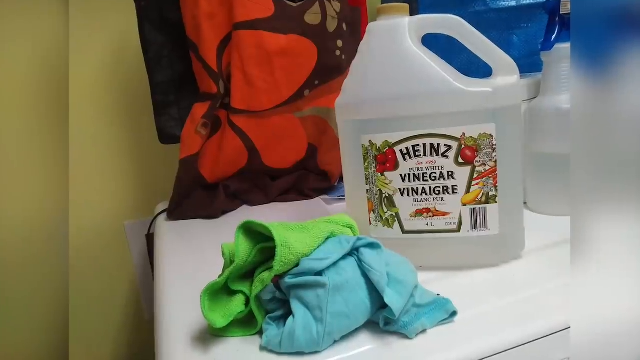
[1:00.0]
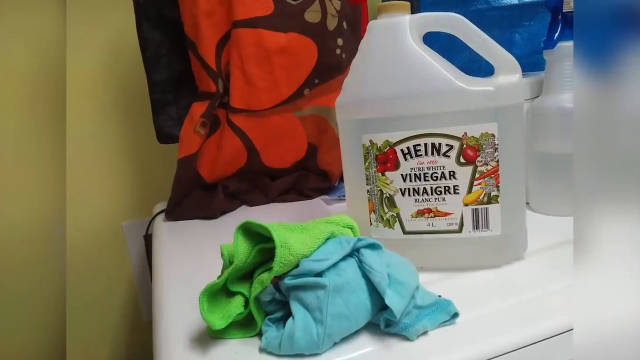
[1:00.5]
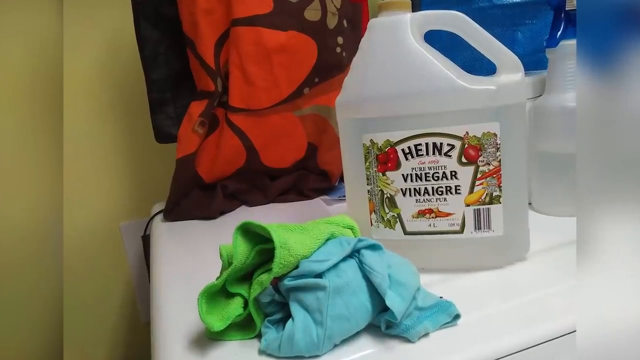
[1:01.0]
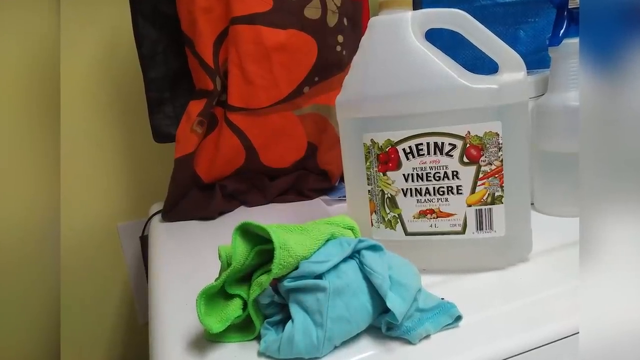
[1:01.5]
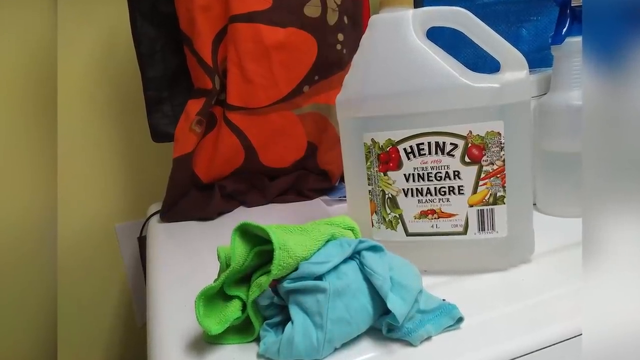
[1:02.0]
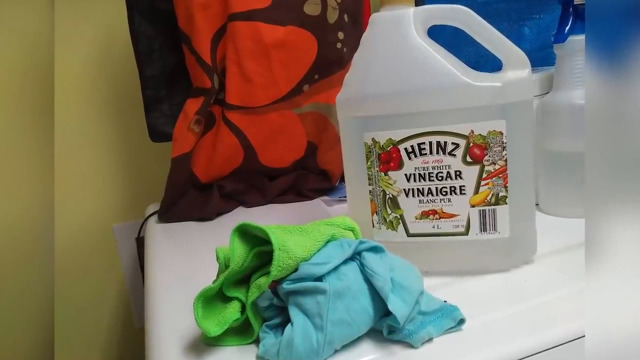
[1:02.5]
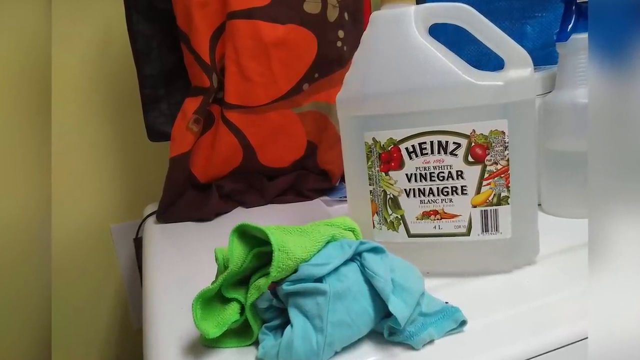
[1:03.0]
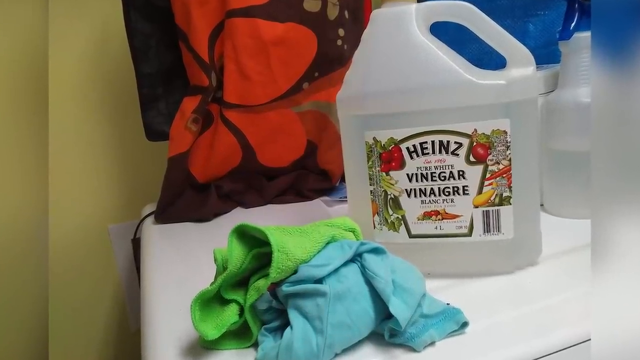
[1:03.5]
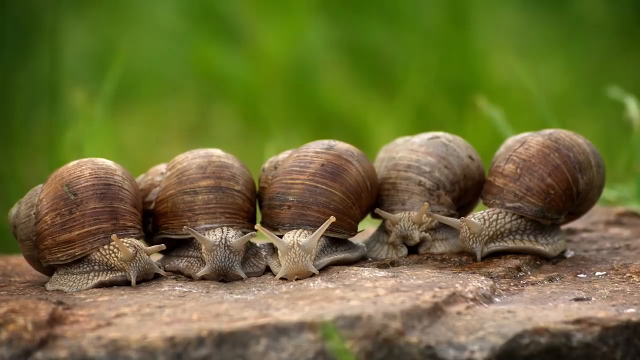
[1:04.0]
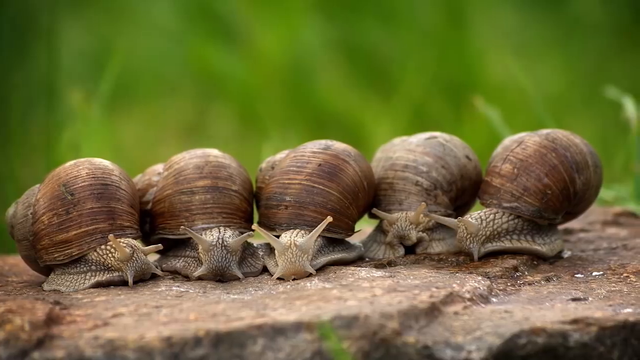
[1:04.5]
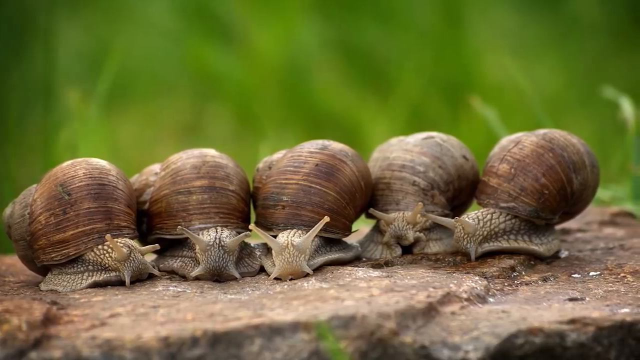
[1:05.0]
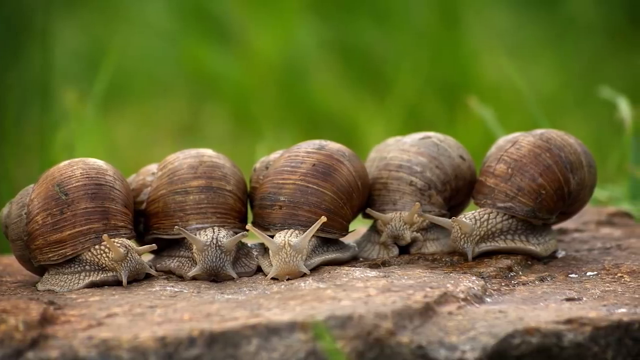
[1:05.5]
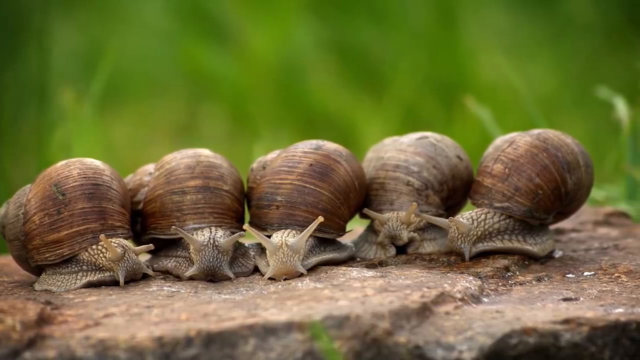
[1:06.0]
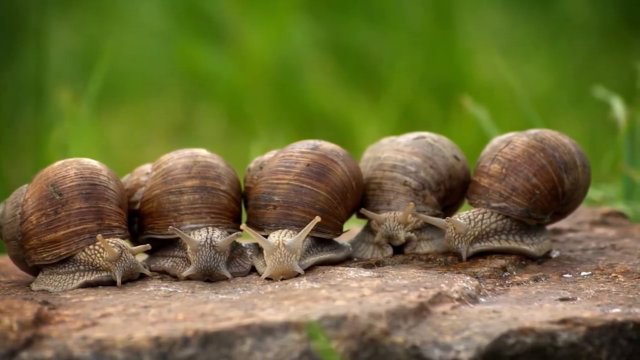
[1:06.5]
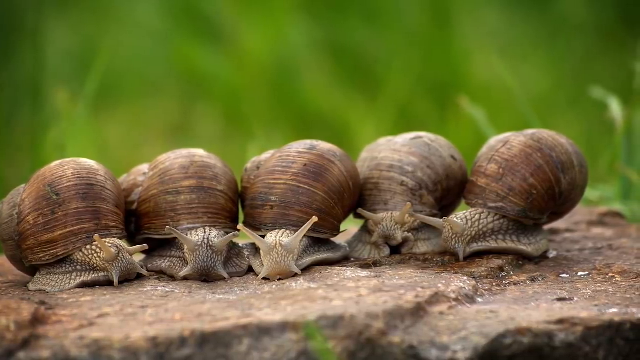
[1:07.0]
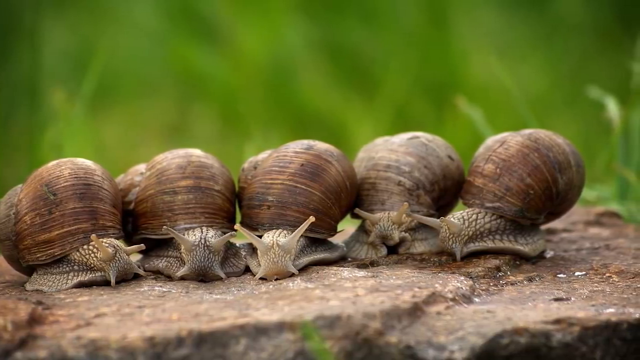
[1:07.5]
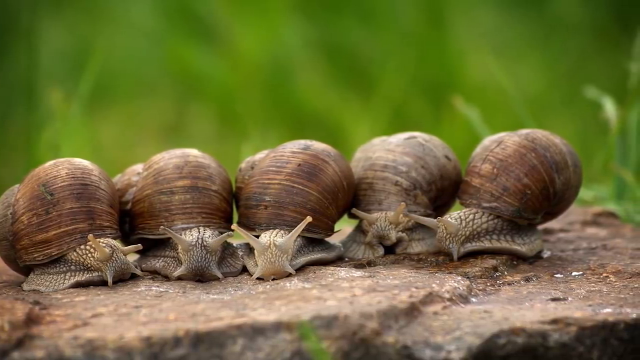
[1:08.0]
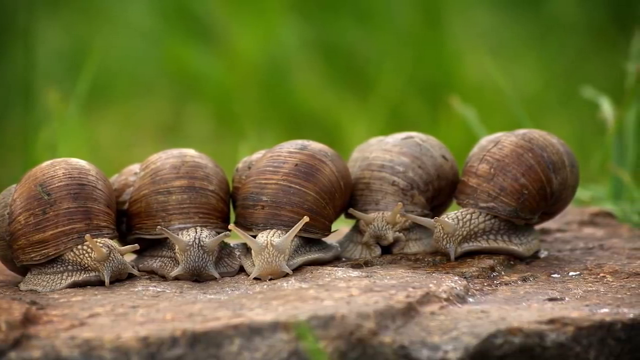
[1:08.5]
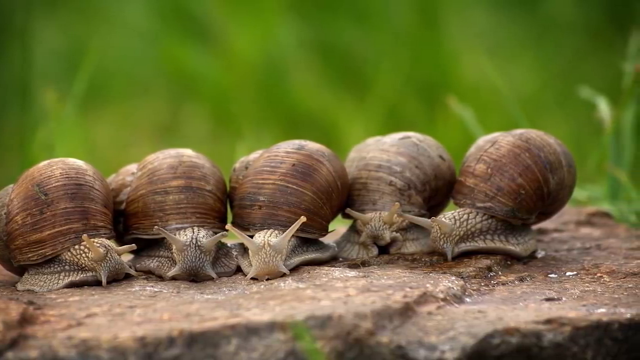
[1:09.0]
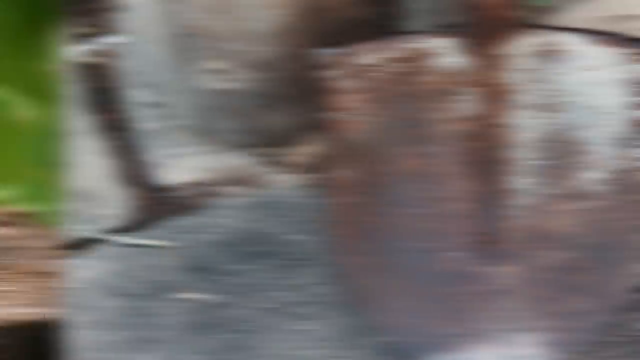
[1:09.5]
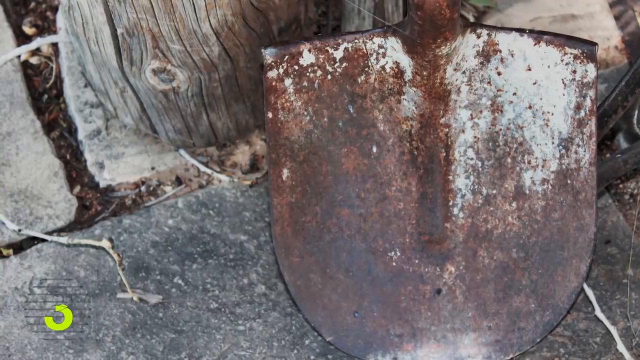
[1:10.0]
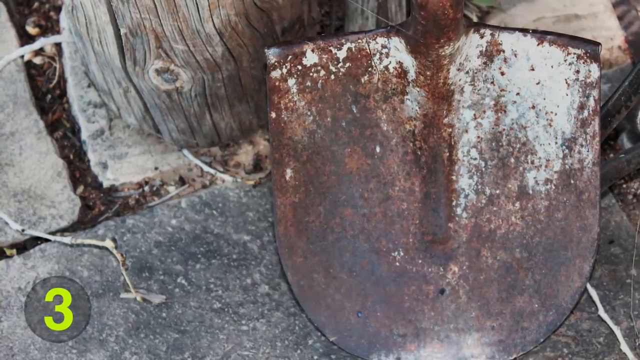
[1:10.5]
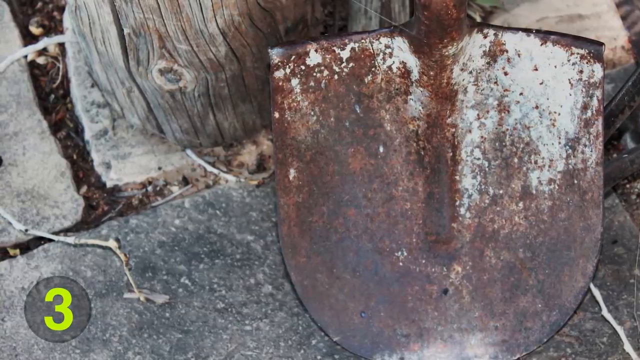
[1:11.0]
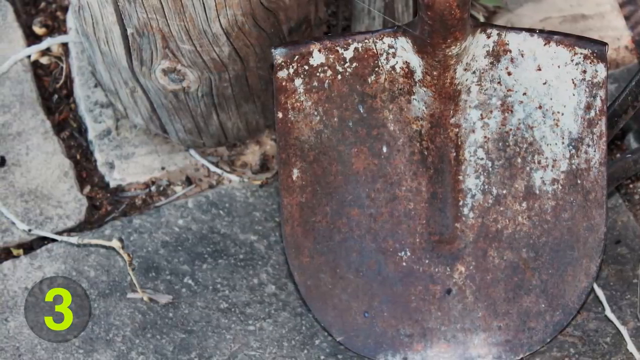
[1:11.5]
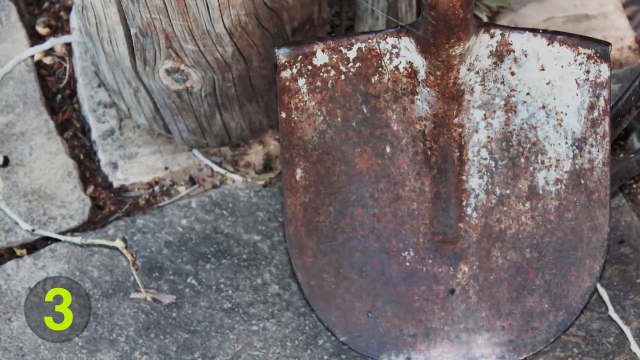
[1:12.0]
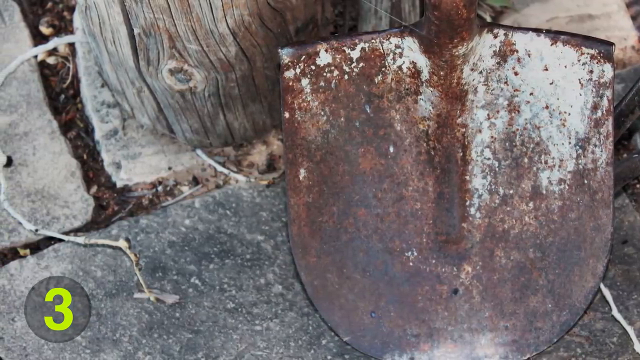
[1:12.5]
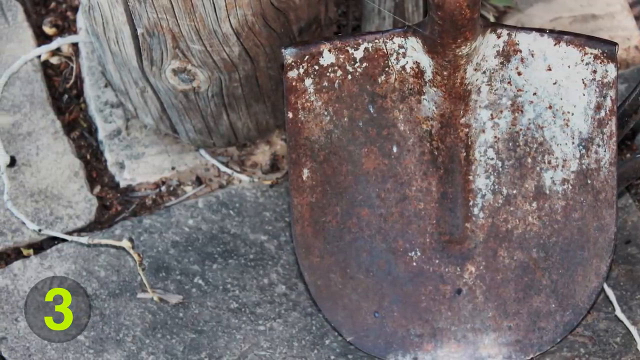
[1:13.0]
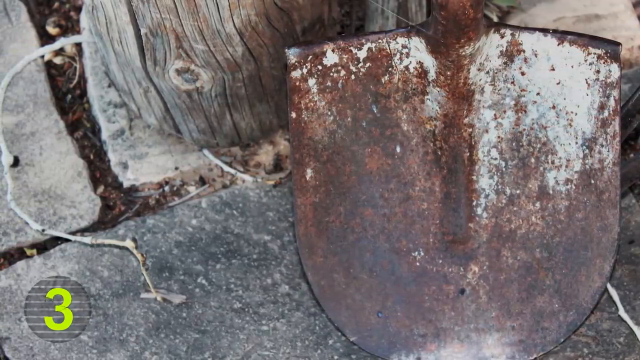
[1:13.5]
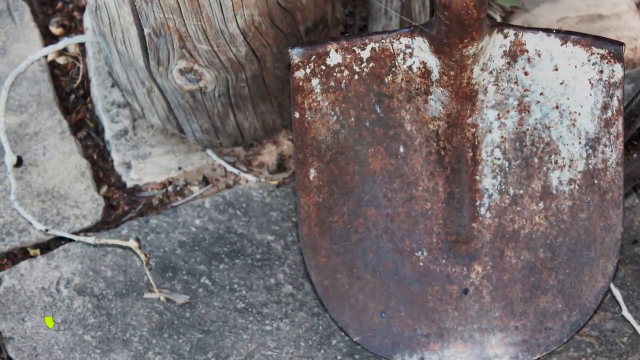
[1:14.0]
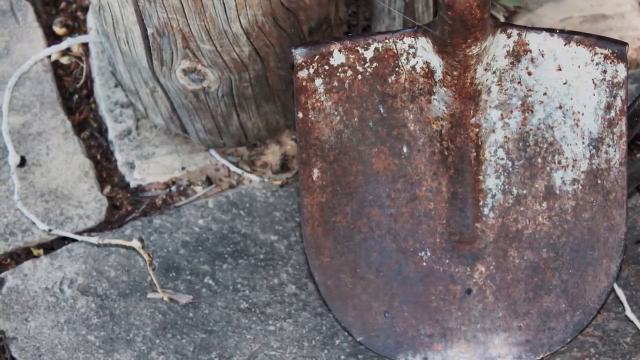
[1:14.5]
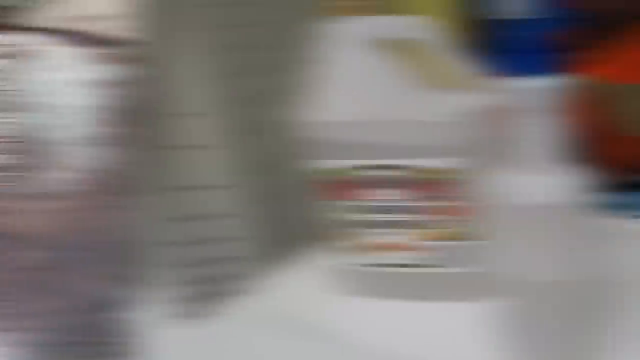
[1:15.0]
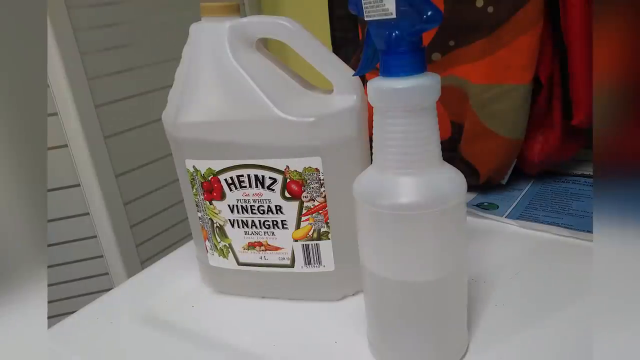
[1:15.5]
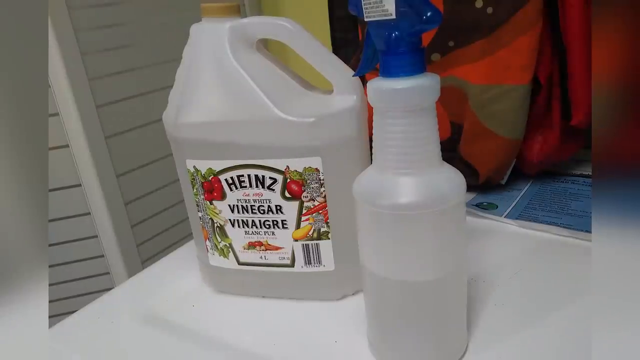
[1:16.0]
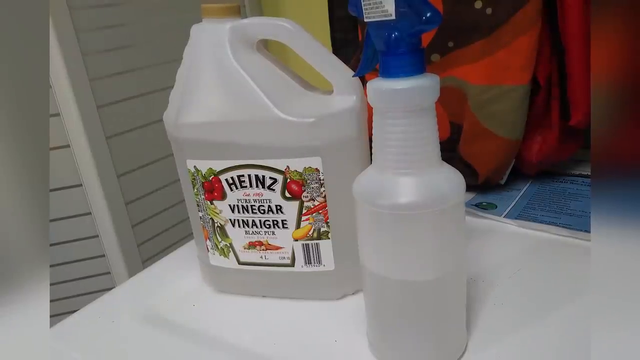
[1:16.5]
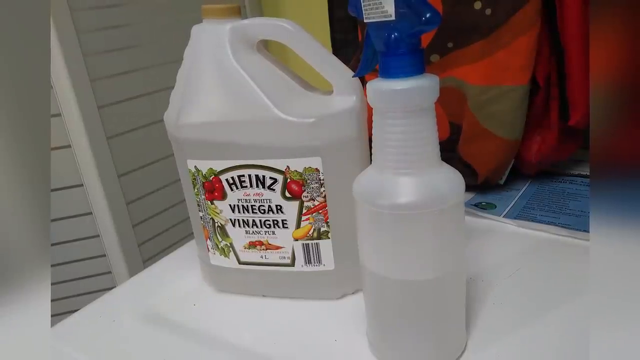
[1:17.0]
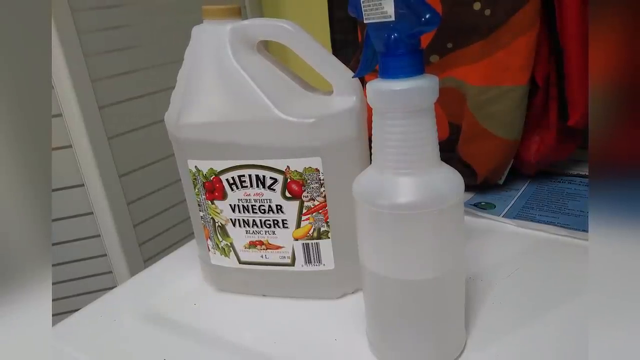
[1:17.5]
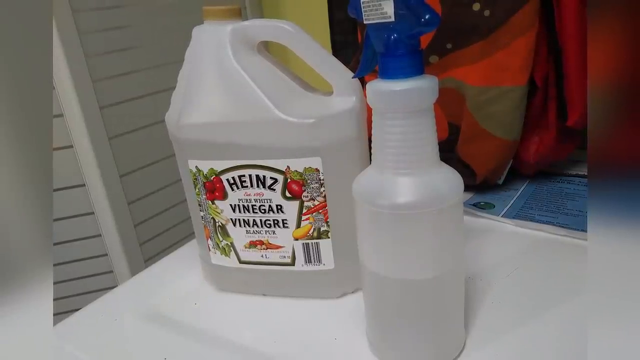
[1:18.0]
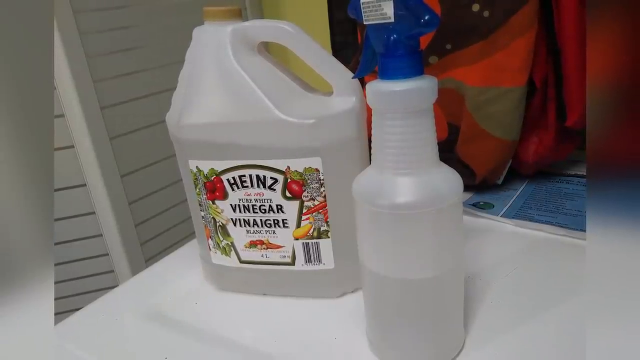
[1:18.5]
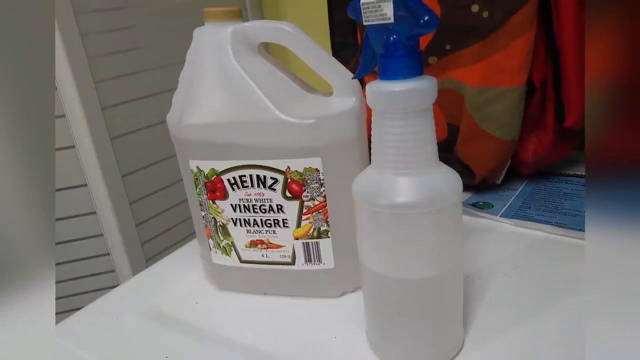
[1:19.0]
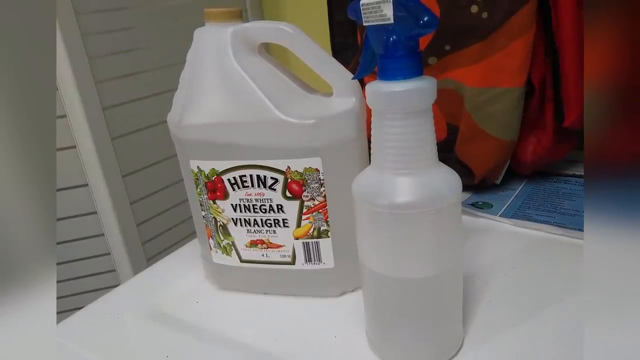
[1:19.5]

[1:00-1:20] The see-through vinegar bottle, with the words "Heinz vinegar pure white" in black text, appears, looking to be on top of a white washing machine. Next to it appear to be a small green towel and a crumpled blue shirt, and behind it looks to be an orange blanket. The shot quickly cuts to a very close-up view of five snails with brown shells, all appearing to move toward the camera, with what looks to be blurred green grass behind them. The shot then cuts to a rusty shovel, and then back to the Heinz pure white vinegar bottle and the spray bottle next to it on top of the washing machine.